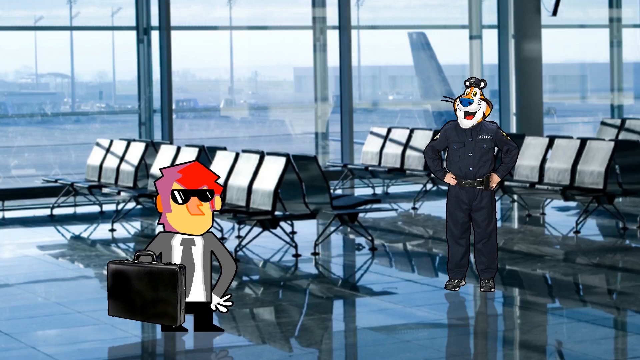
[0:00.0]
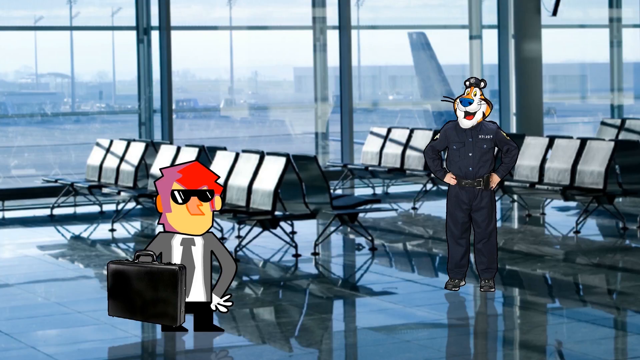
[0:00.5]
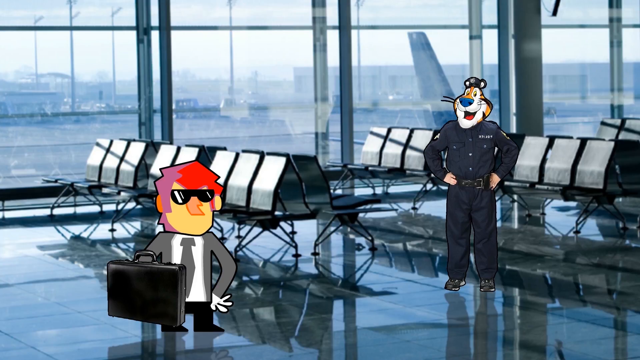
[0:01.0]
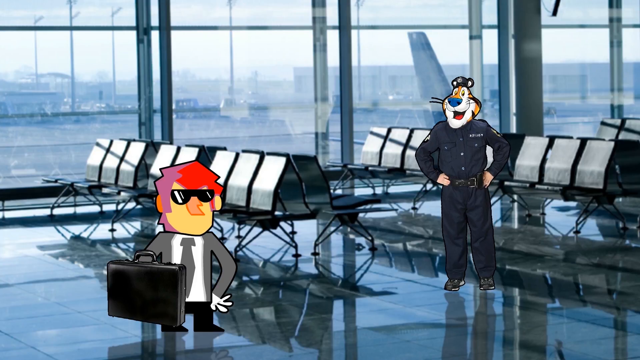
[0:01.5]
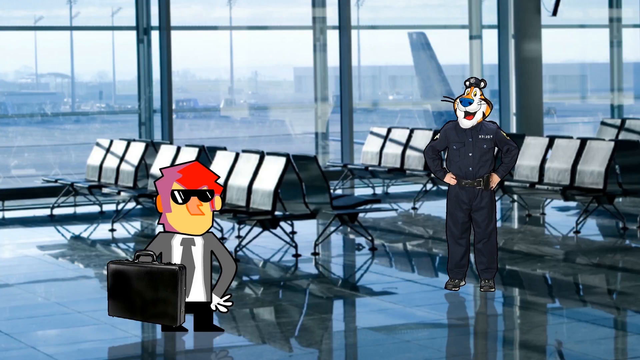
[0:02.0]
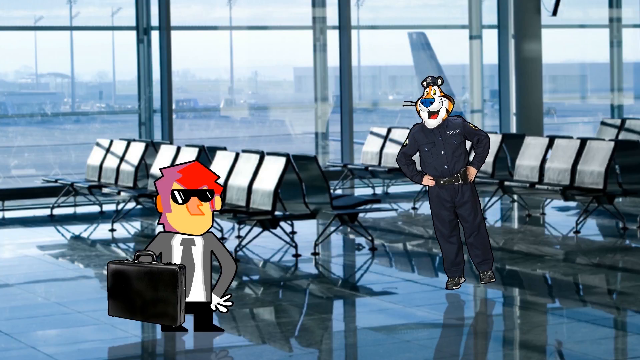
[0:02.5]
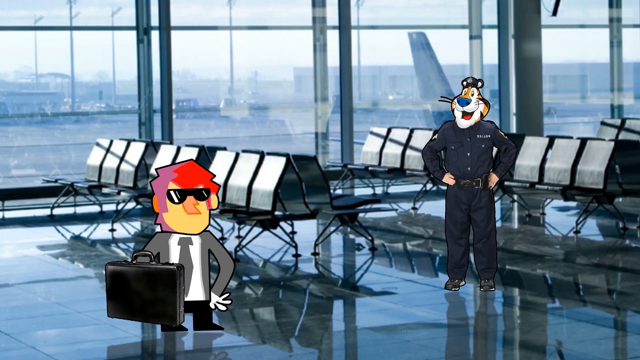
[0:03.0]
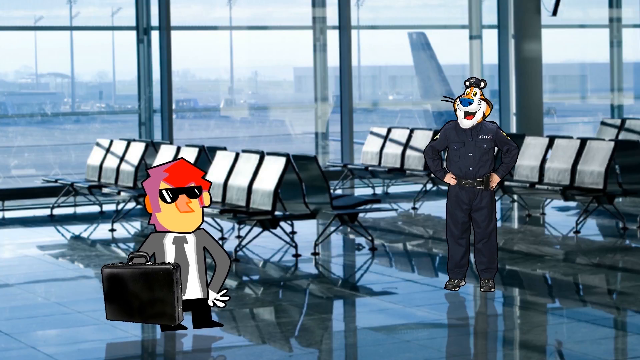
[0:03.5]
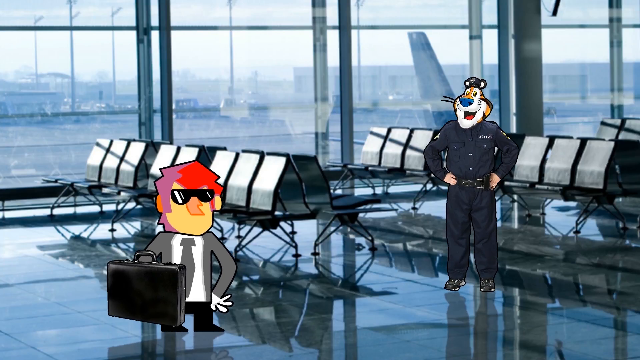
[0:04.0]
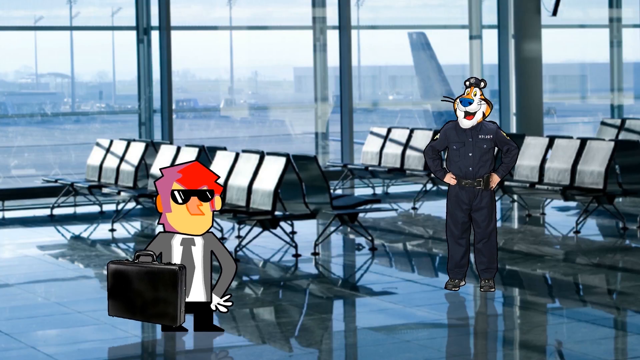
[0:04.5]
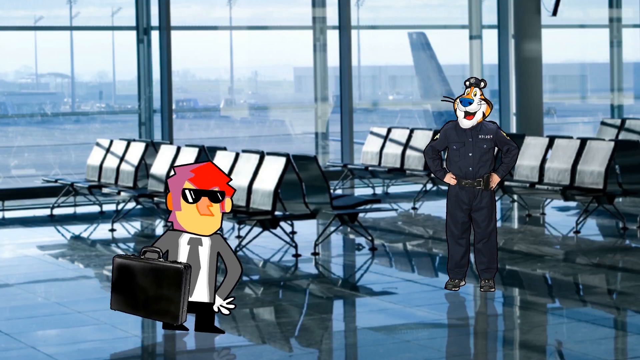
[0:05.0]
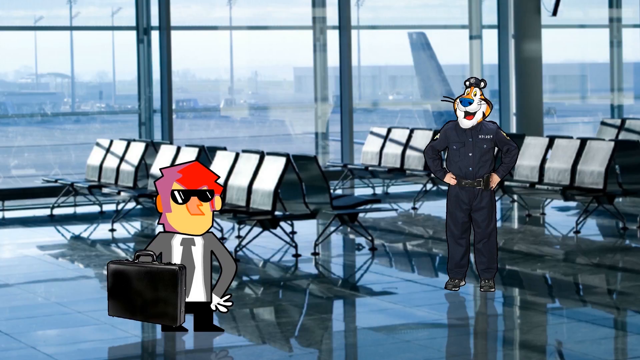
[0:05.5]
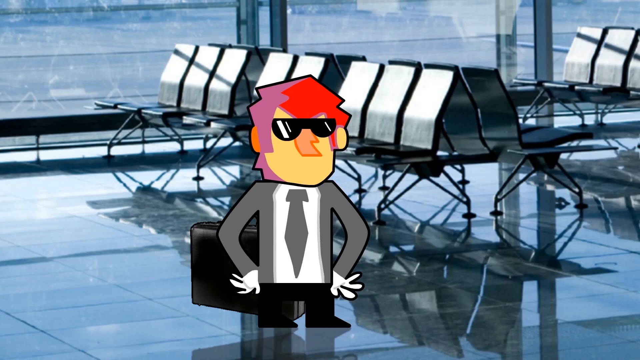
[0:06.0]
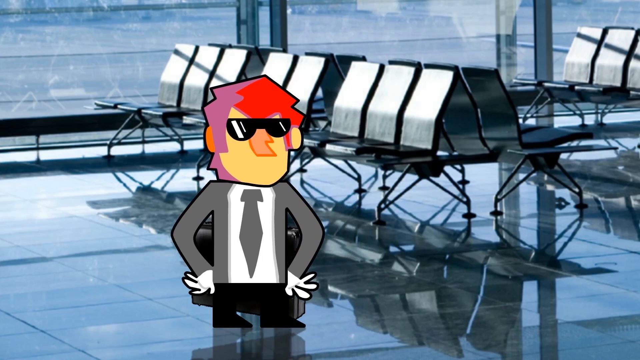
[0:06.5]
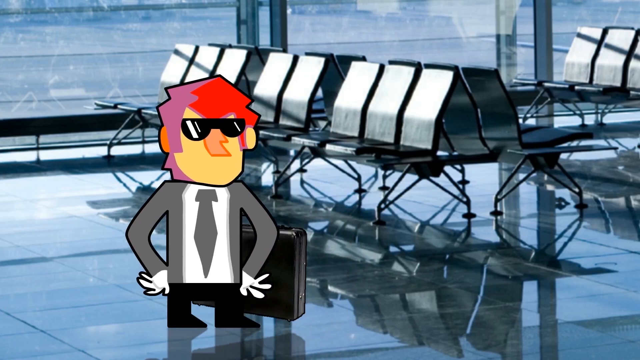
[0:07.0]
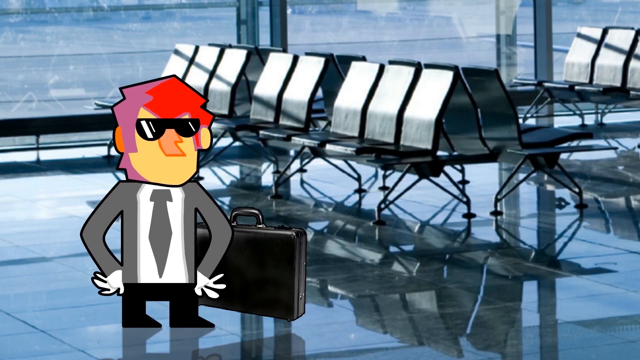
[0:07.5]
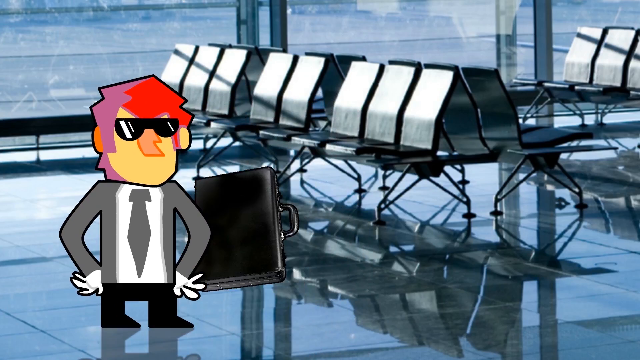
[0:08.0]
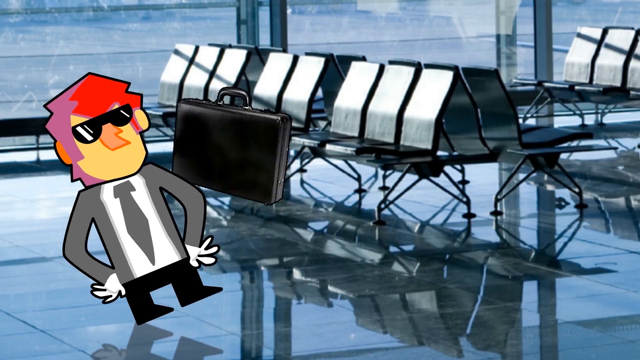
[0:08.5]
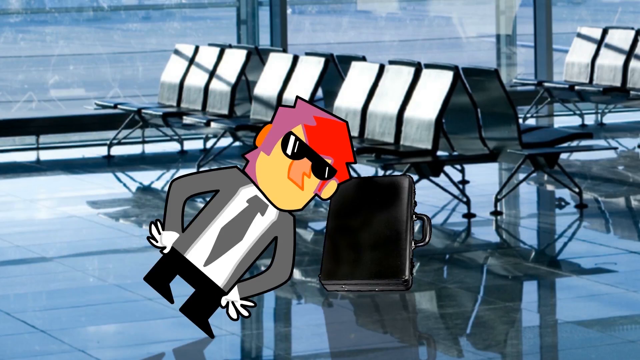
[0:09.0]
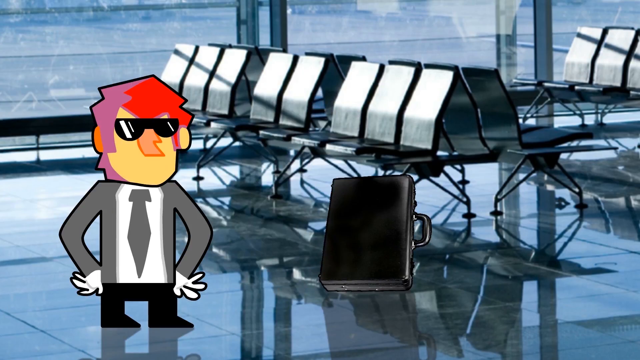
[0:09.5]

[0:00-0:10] The scene appears to be an airport waiting or boarding area with two characters. The one in the bottom left-hand corner is unidentified; it seems to be an exaggerated character of a man holding a briefcase, with what looks like red hair, black sunglasses and a very distorted nose, and maybe a suit and tie with black pants. Tony the Tiger is to the right, wearing a policeman's uniform. He jumps up and down and moves back and forth a little, as does the little red-haired man in the bottom left-hand corner. The little man picks up his briefcase, apparently flings it at one of the chairs, and then sits down with it. Through the glass window, planes and vehicles are visible out on the tarmac. The whole scene looks kind of early morning, with the sun not yet high in the sky, giving it a somber, light look.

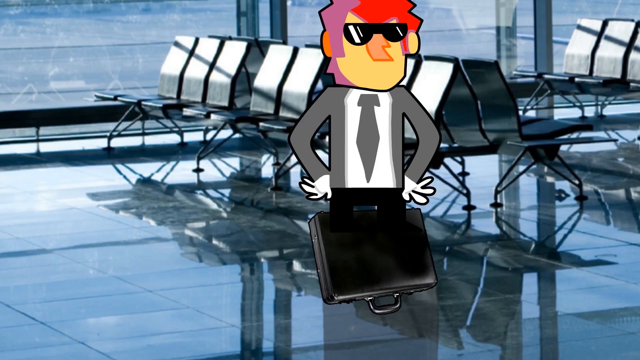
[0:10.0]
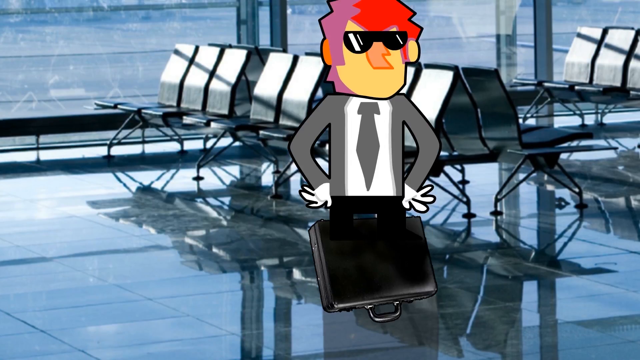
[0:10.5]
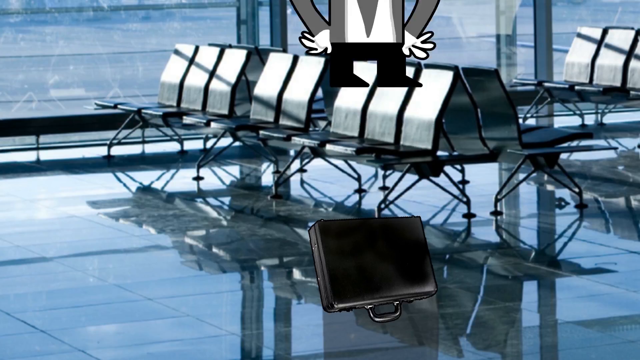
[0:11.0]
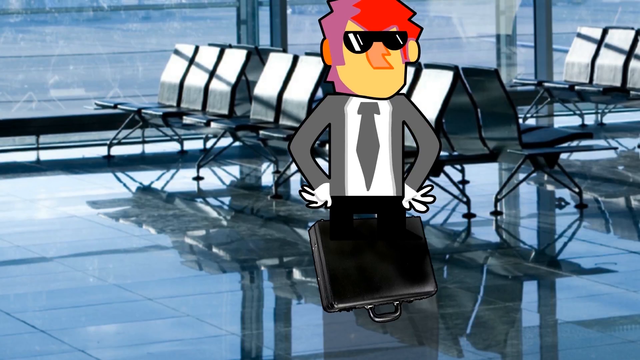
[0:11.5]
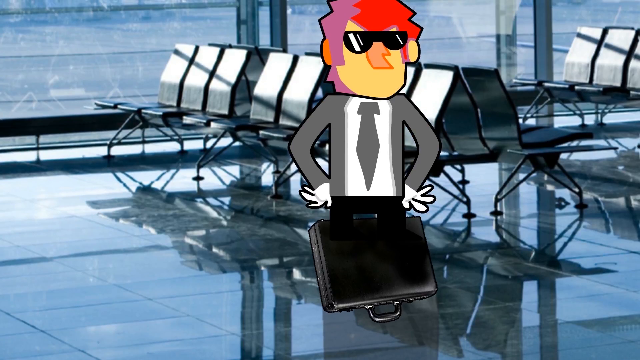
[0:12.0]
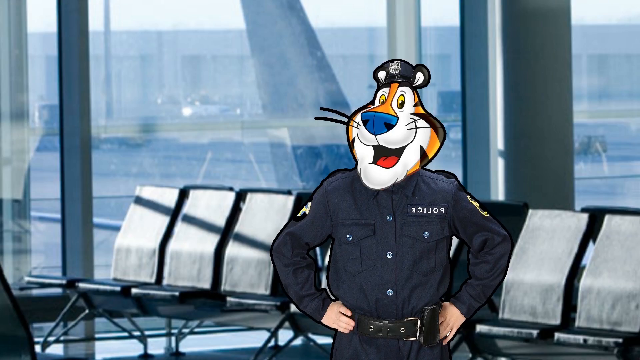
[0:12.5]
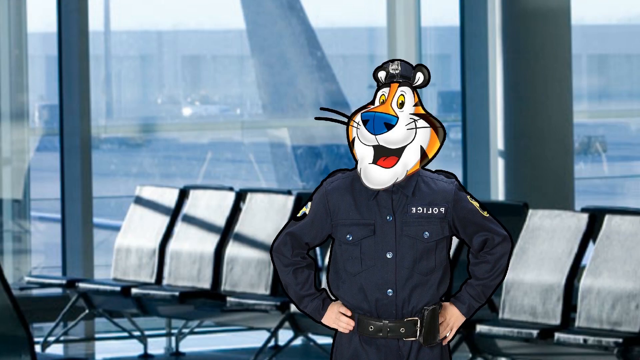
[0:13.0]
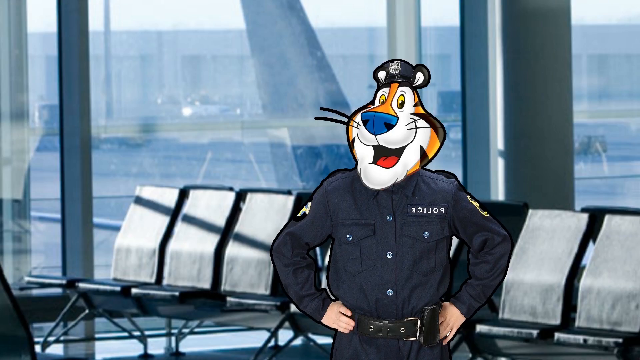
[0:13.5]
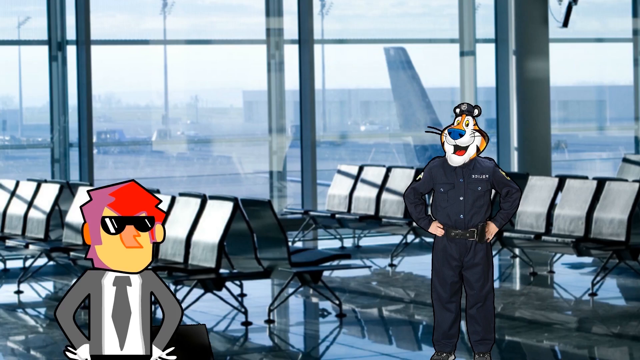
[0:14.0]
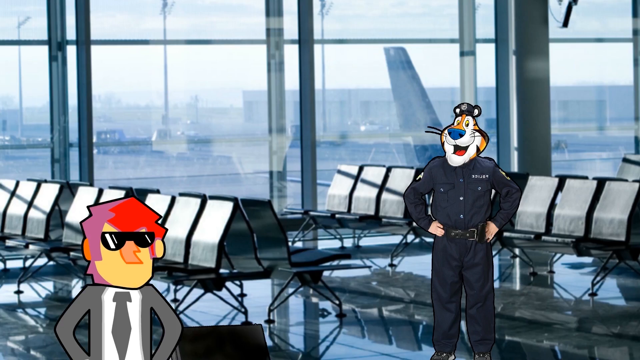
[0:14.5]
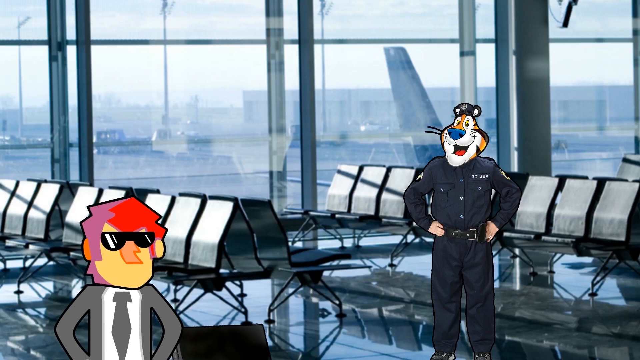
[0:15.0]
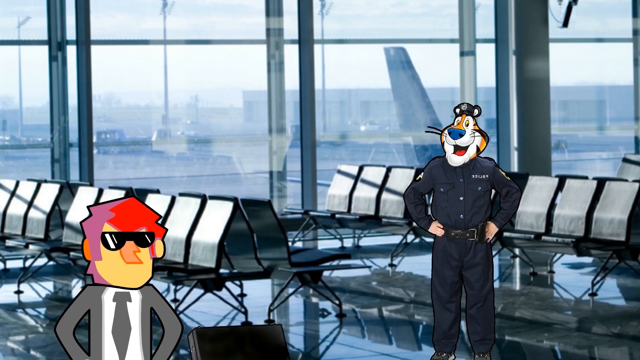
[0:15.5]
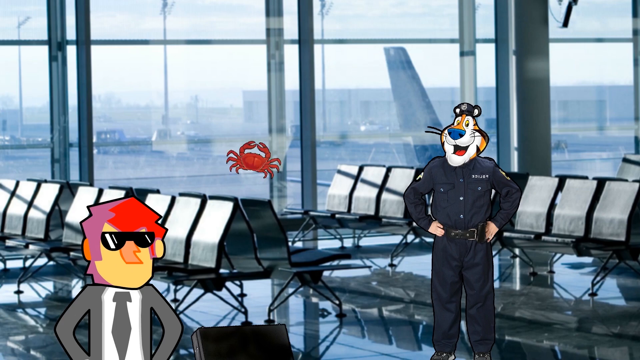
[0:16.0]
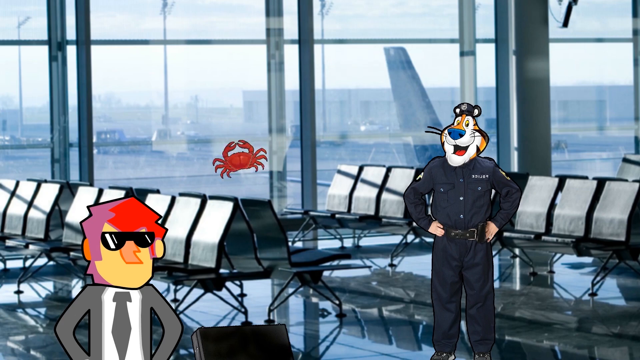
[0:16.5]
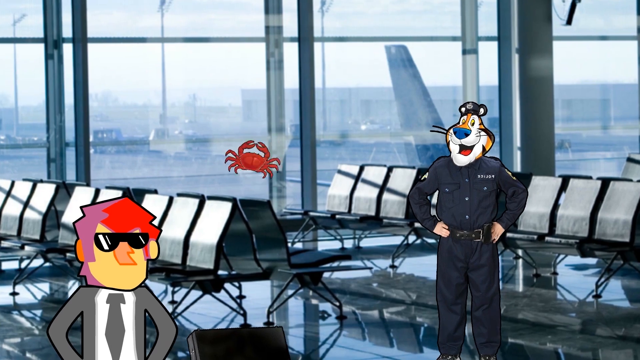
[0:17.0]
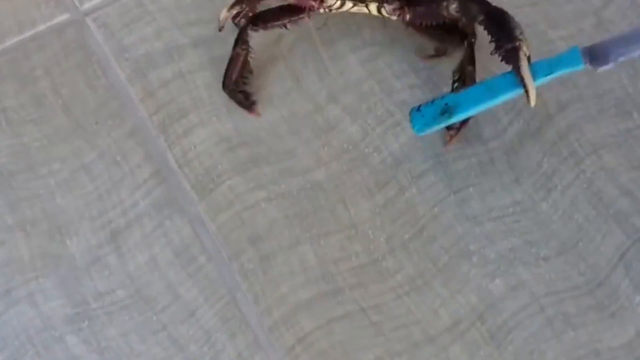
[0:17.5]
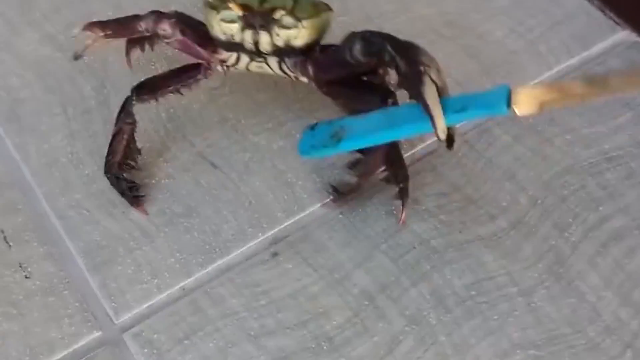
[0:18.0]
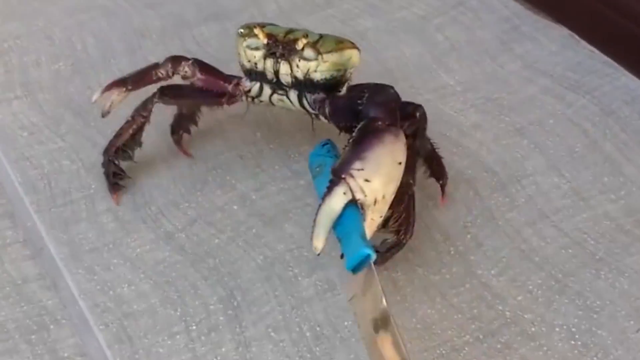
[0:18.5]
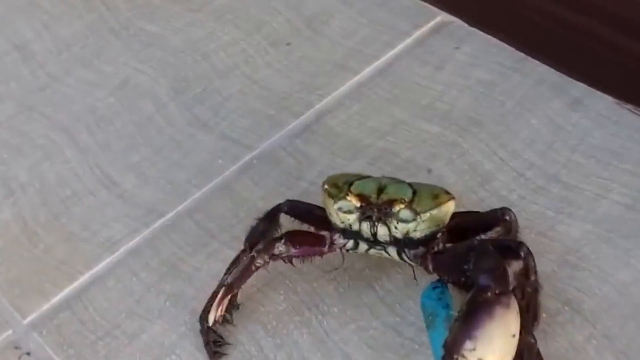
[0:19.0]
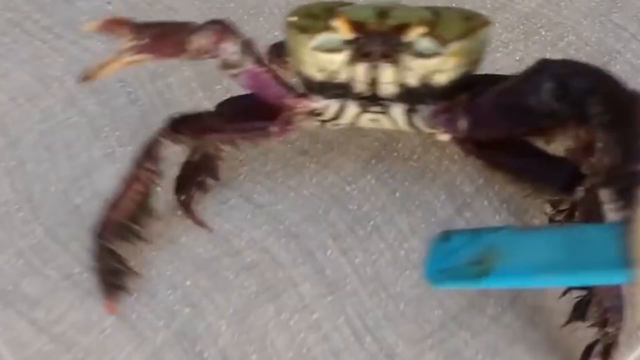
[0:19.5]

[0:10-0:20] The little red-haired man is over by the chairs with his briefcase, and he jumps up and down on the briefcase. A closer shot shows Tony the Tiger in his police outfit for a moment. The view then goes back out to a wider shot with both characters in frame, and the red-haired man bounces up and down for a second. What appears to be a cartoon crab pops up out of nowhere, slightly left of the middle of the screen, and spins around. The video then switches to a real-life crab running backwards across a dull gray tiled floor, holding what appears to be a knife and waving the blade. The knife has a bluish, plastic-looking handle and may look more like a butter knife, though its end is not visible. The crab is red, though not as bright red as the cartoon version, and its main body looks more of a cream white color. Some text seems to flash up briefly at the end, too quickly to read.